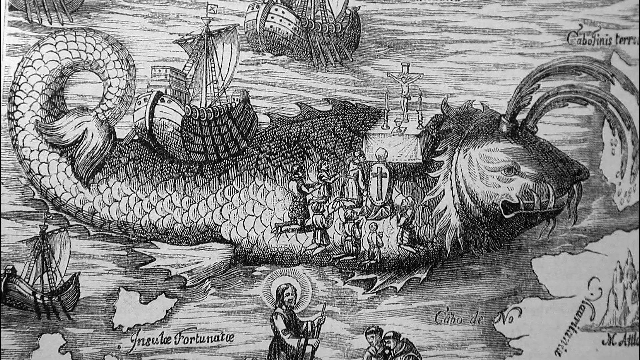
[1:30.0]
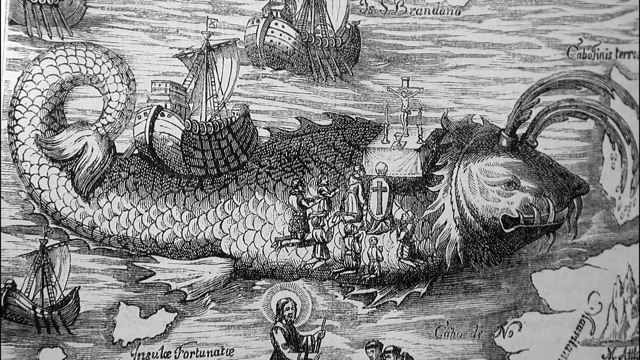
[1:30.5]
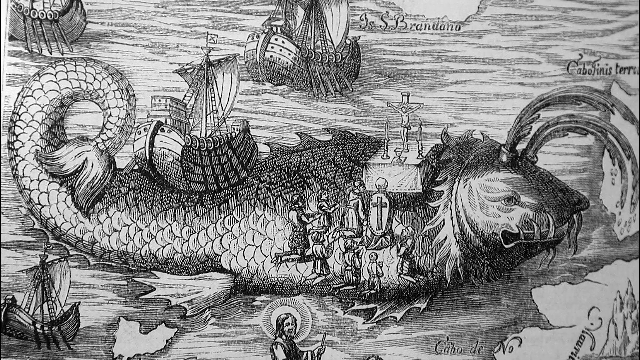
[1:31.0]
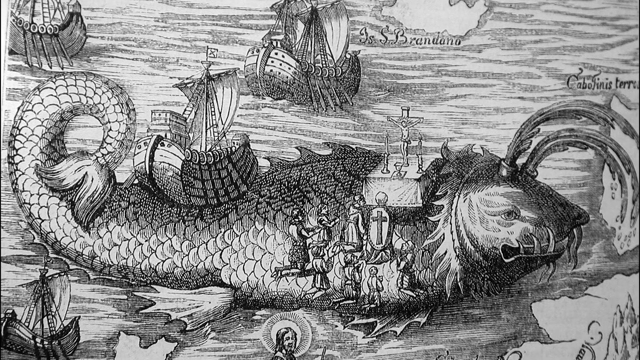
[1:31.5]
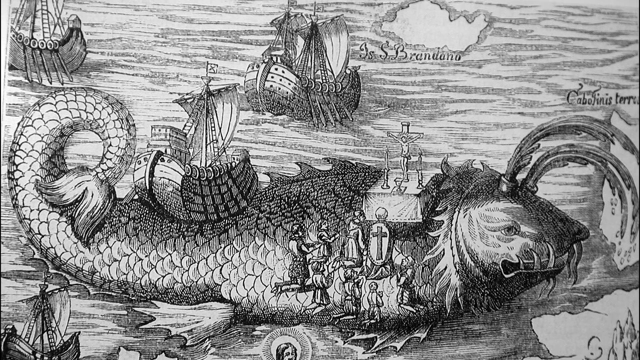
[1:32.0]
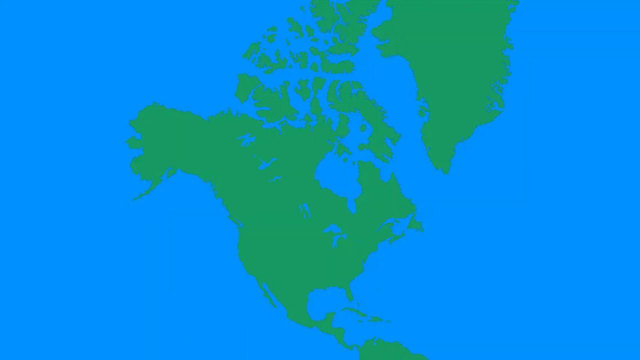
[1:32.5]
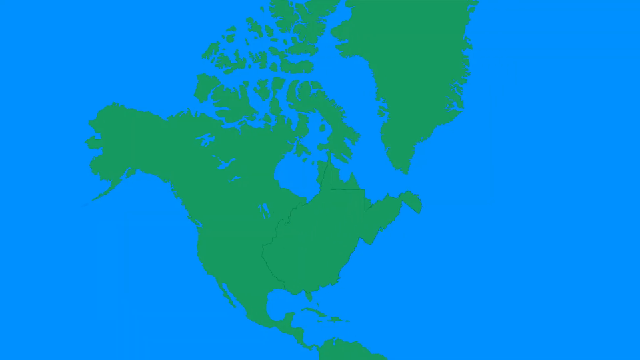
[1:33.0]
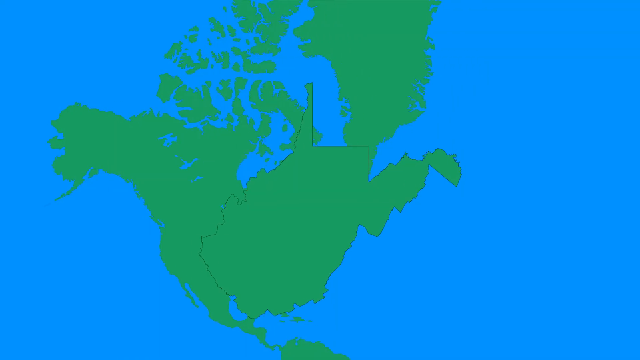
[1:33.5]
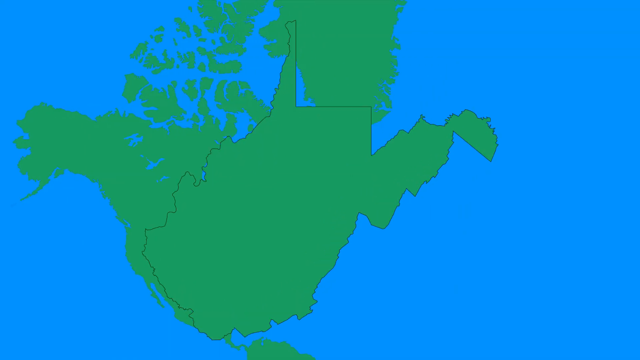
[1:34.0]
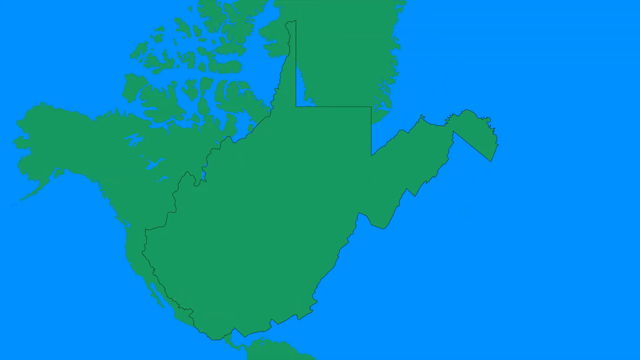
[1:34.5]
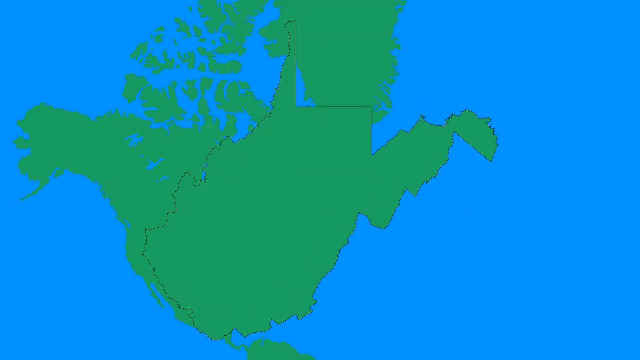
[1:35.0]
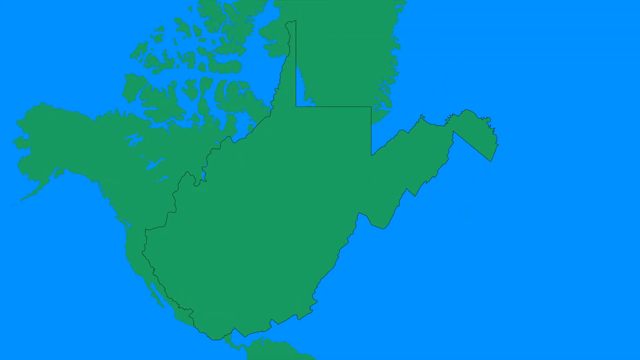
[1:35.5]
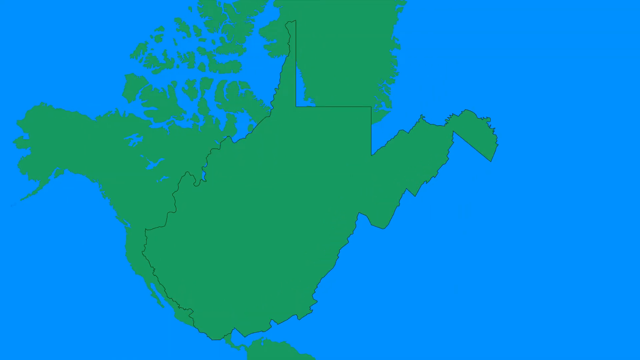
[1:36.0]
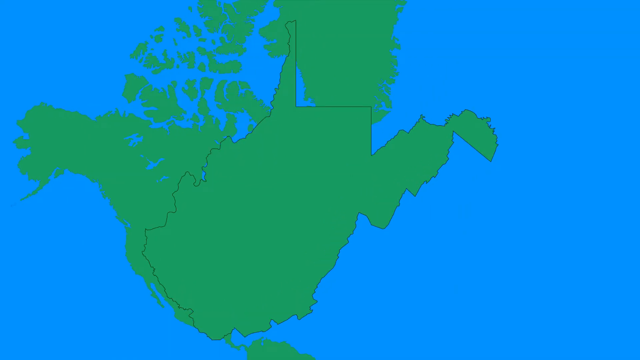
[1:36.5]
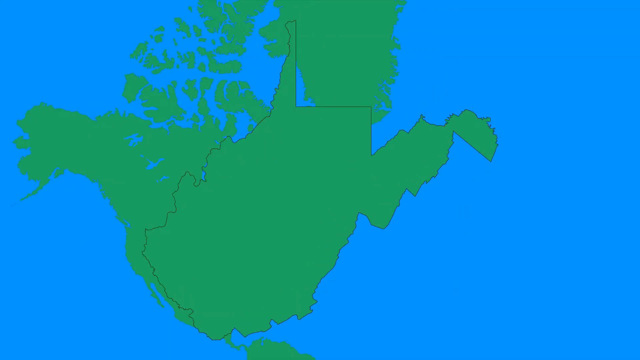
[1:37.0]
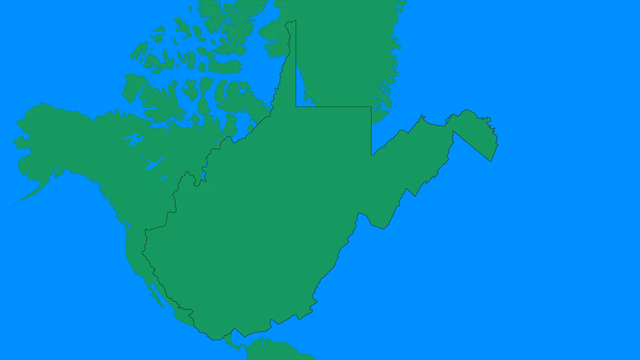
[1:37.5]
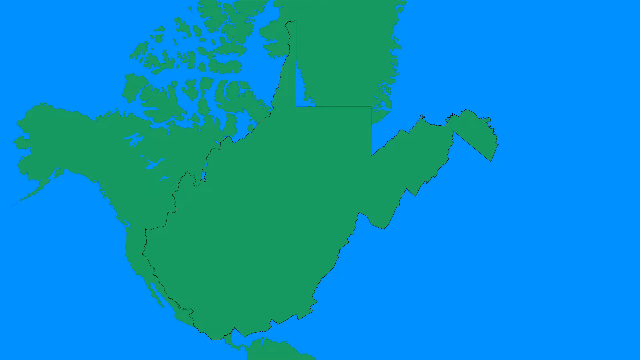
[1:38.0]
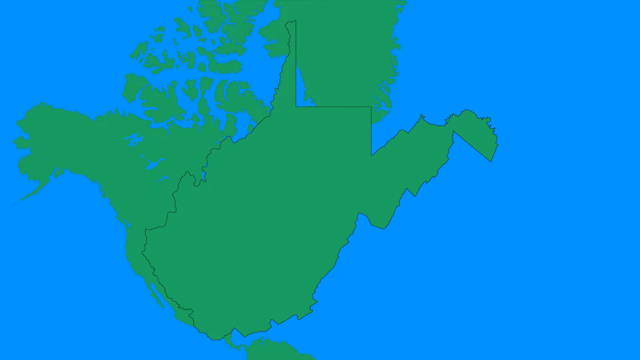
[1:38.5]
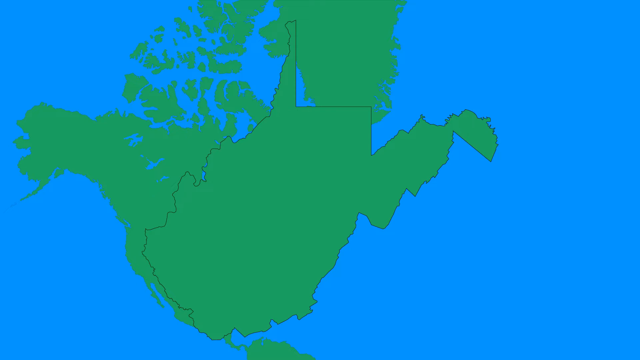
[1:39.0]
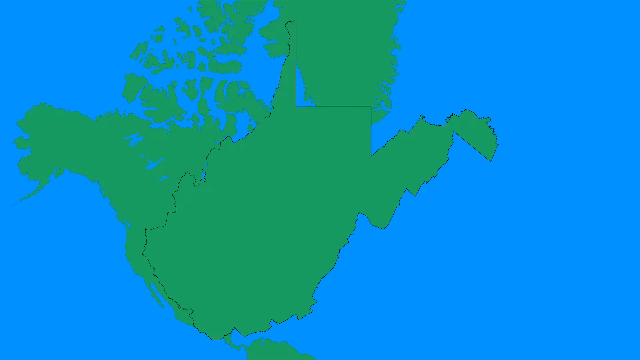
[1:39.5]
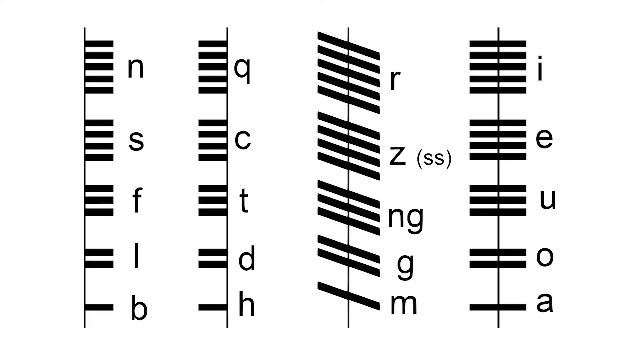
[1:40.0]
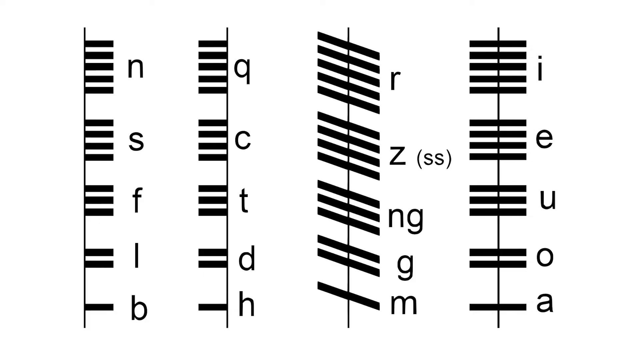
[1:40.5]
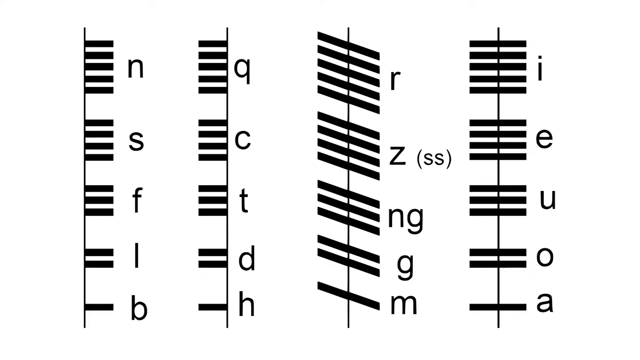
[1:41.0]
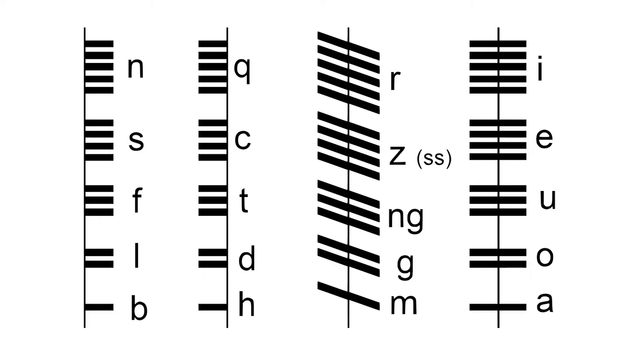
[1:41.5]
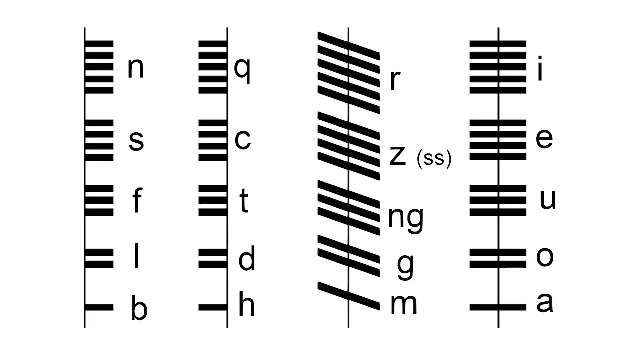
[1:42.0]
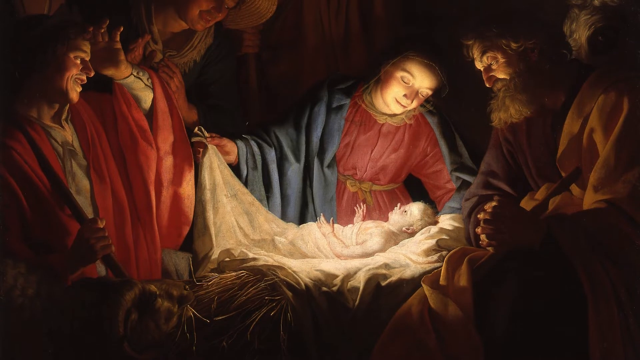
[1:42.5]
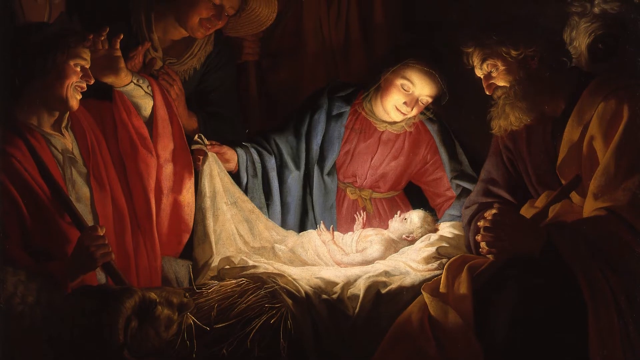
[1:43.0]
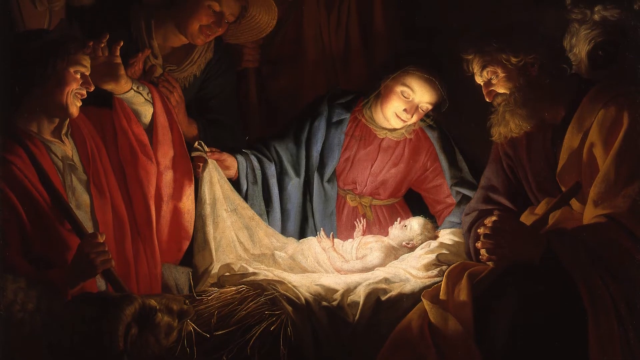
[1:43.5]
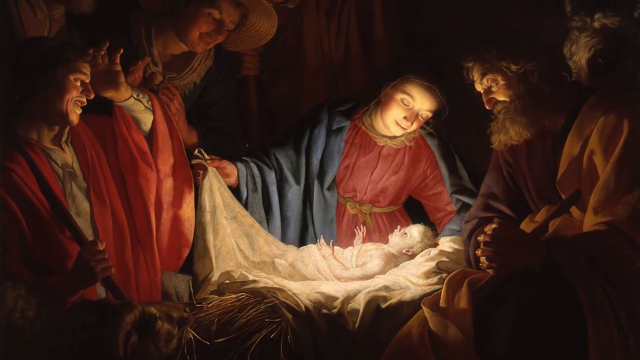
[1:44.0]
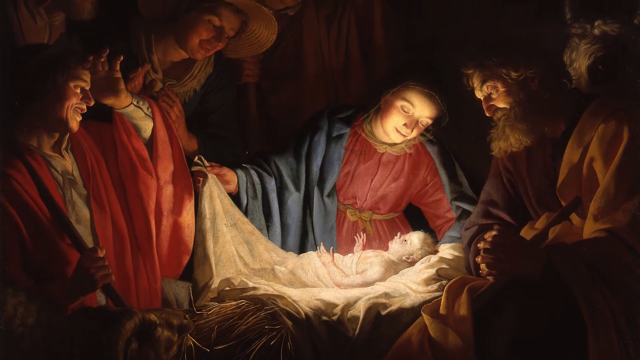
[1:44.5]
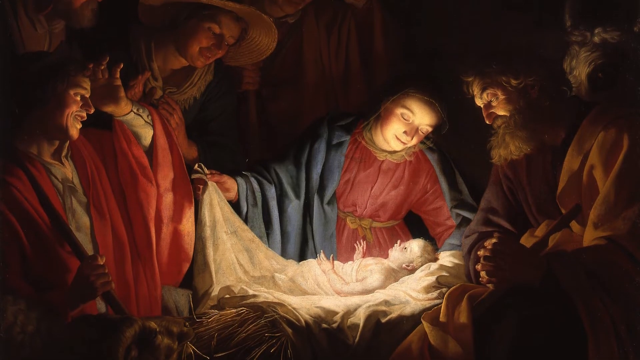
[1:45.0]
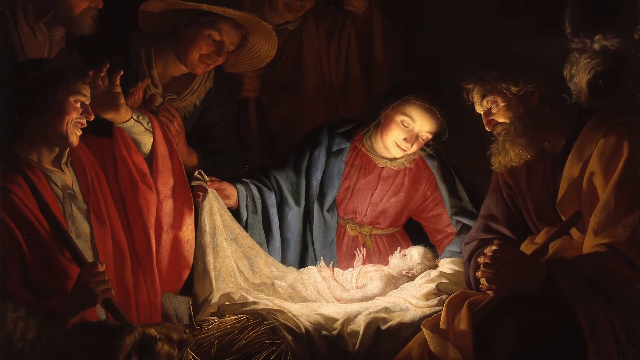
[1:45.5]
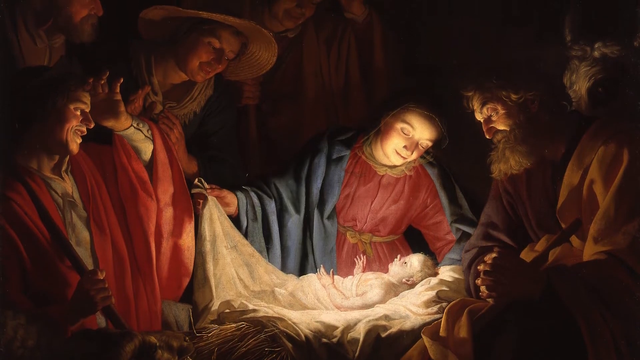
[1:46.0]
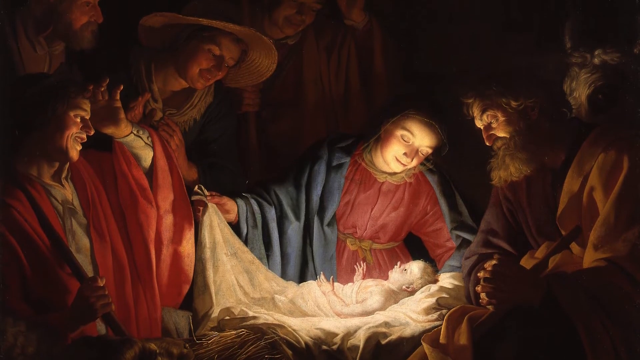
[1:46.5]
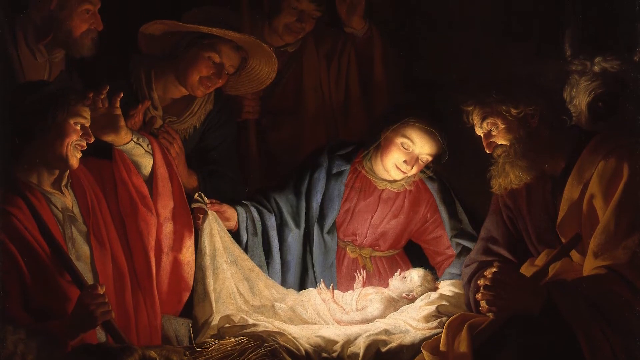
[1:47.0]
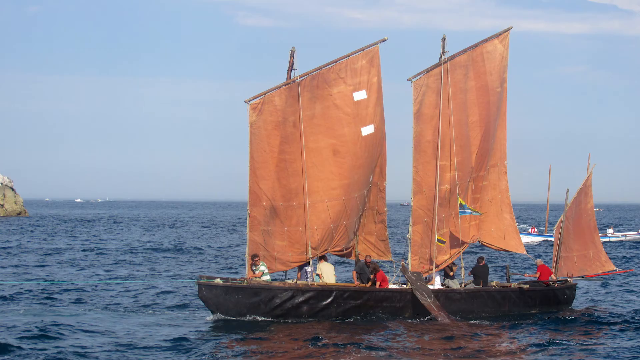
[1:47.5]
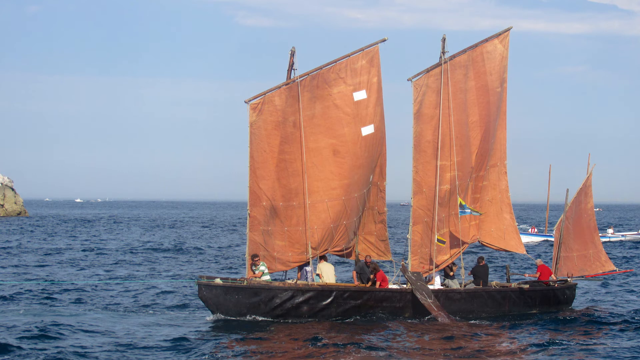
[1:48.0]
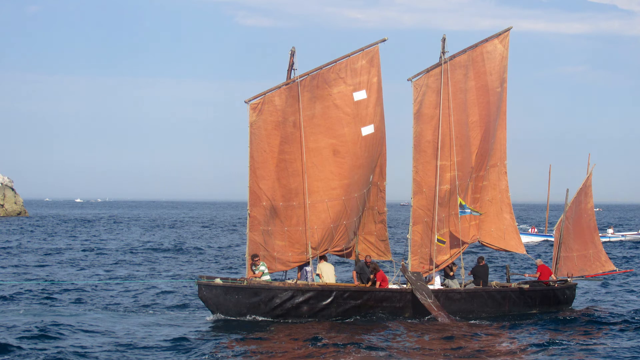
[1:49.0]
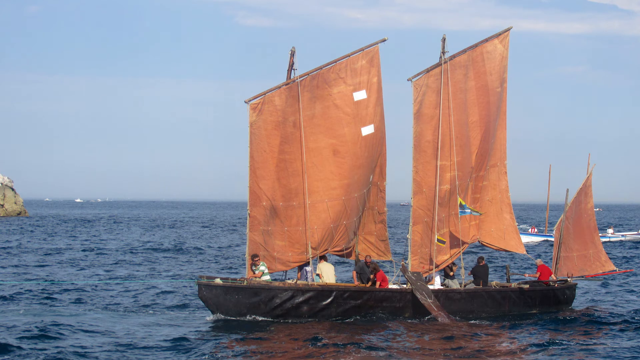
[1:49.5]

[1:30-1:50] The drawing of the fish shows a depiction of Jesus on the cross in the middle of the fish, just behind its back. In front of that, people who look like they are from the Crusades era are climbing up the side of the fish's neck toward Jesus on the cross. A wooden sailboat is sitting on the fish toward its tail. Another sailboat is out in the water below the fish, and religious figures appear to be in the lower part of the screen. Above the fish, other wooden sailboats sail on the ocean all around it. Next, a map shows North America and South America plus Greenland, with a large area of the map superimposed, apparently indicating the area first mapped by Europeans who landed on the coast of the Americas. Then letters that look like music notes appear on the screen; on the left side, from top to bottom, they read "NSFLB" and then "QCTDHRZNGGMIEUAOA." A painting of the baby Jesus in the manger follows, with the mother and father around him and the wise men on the left side looking over the baby. Then an ancient sailboat that has been reconstructed for modern day appears.